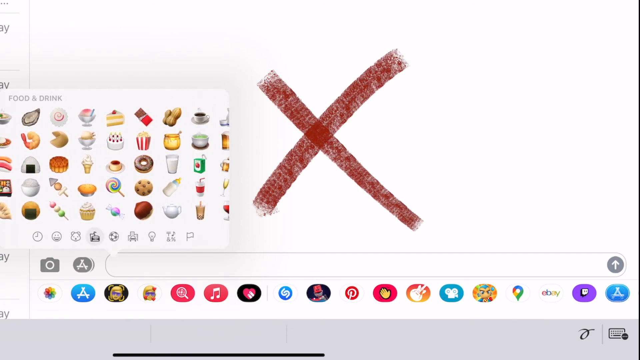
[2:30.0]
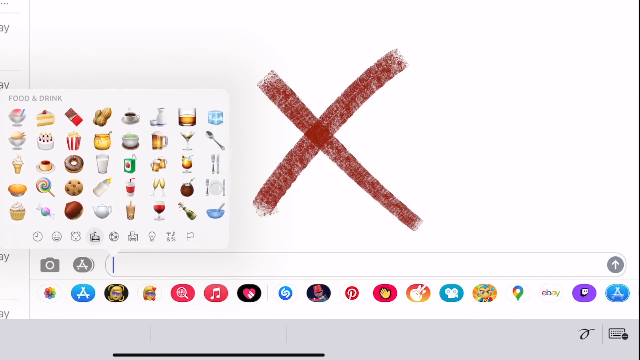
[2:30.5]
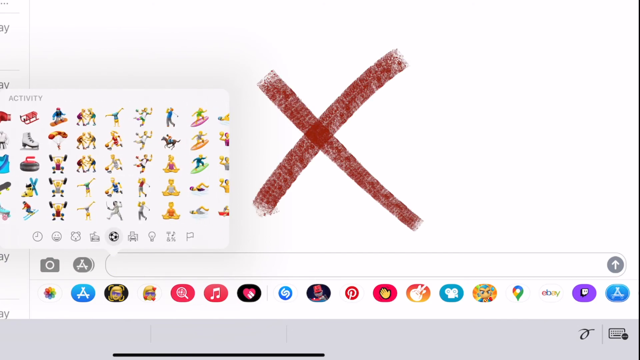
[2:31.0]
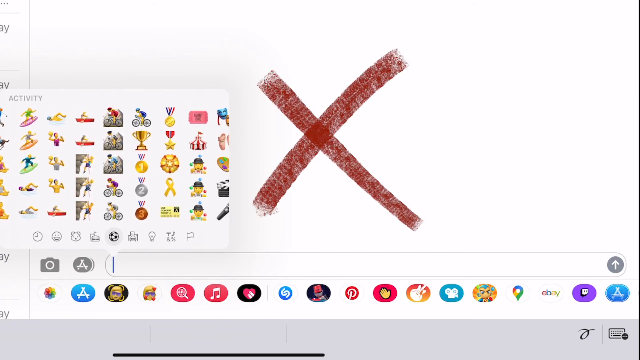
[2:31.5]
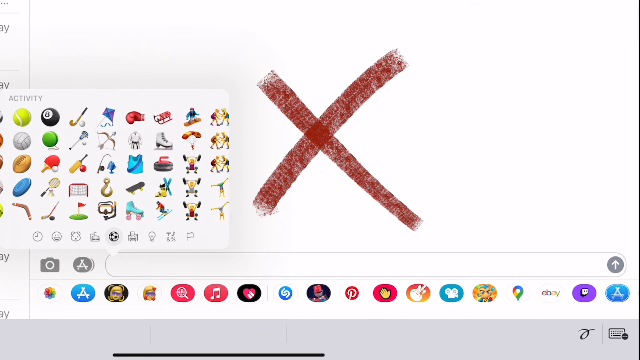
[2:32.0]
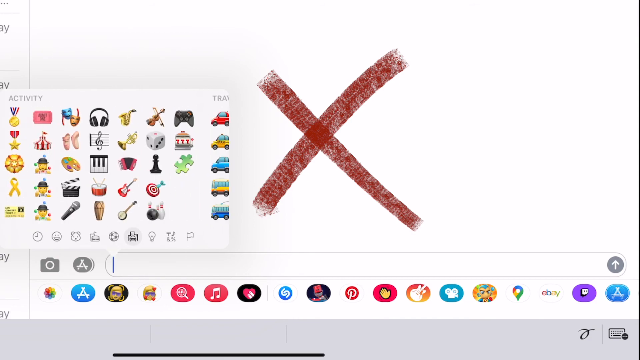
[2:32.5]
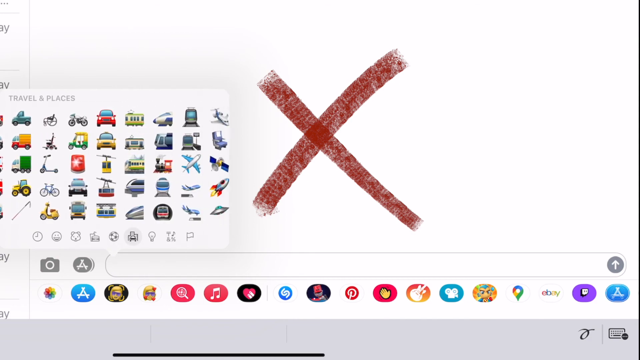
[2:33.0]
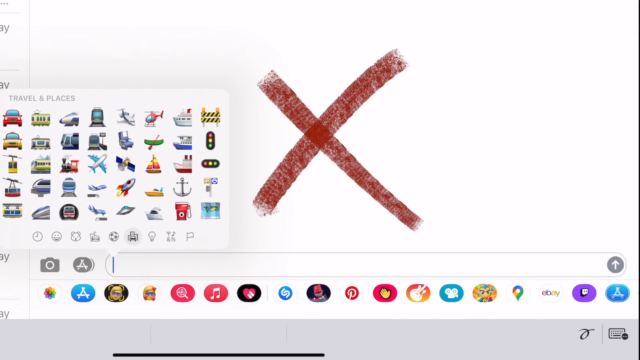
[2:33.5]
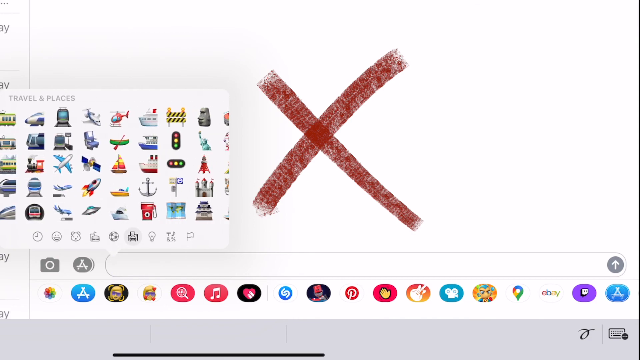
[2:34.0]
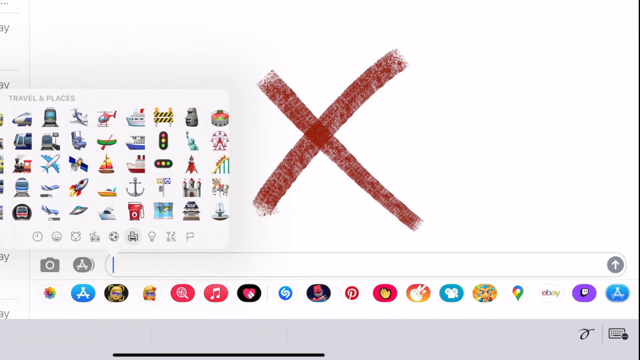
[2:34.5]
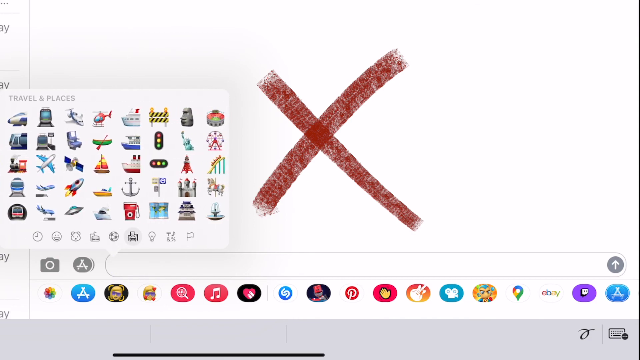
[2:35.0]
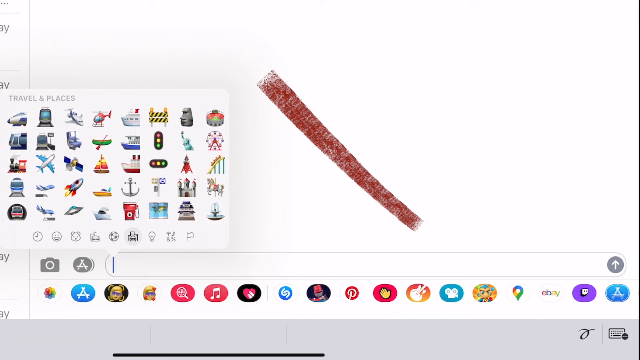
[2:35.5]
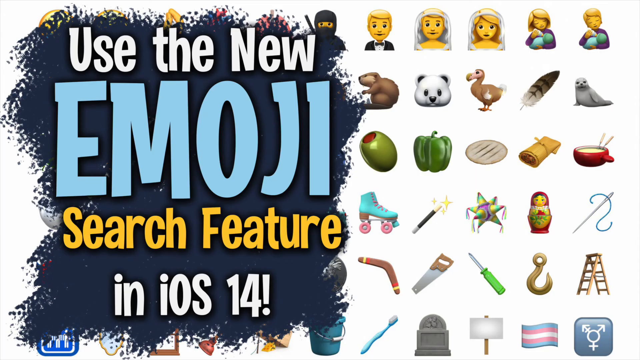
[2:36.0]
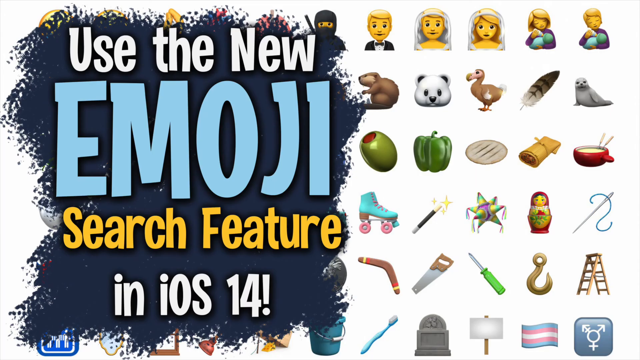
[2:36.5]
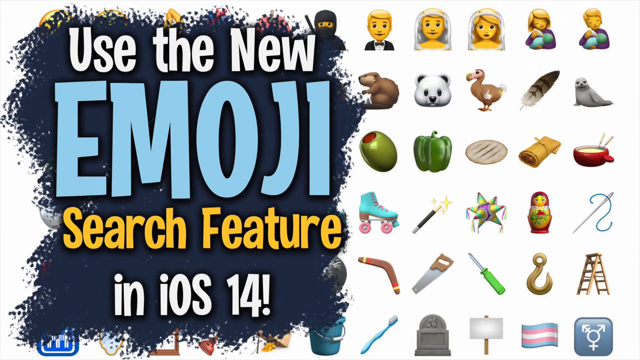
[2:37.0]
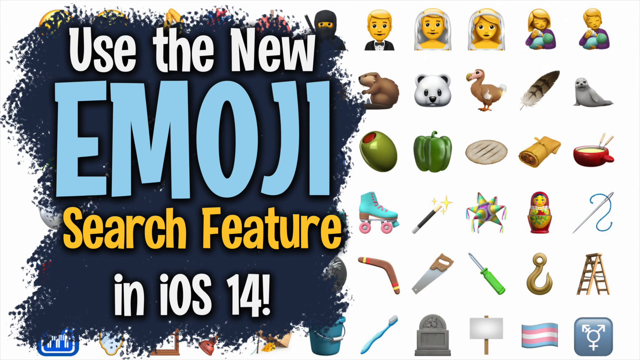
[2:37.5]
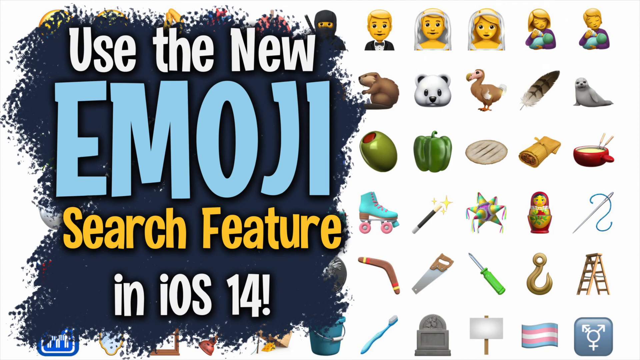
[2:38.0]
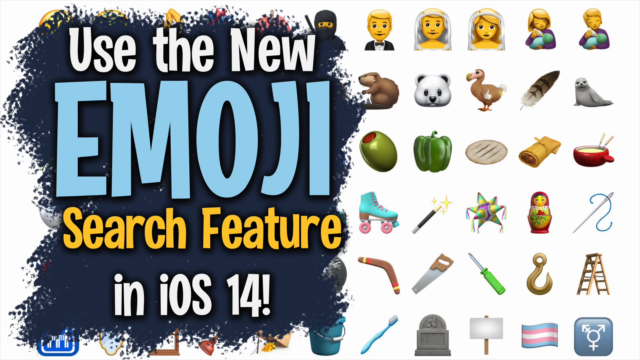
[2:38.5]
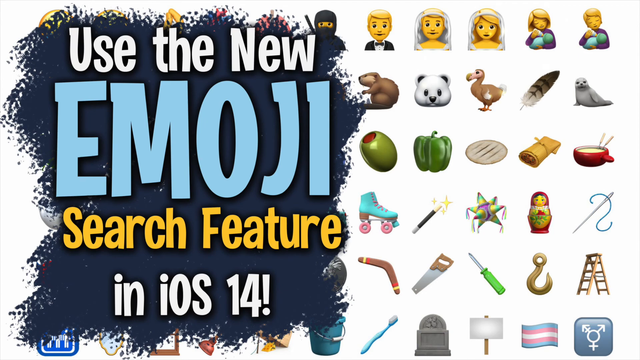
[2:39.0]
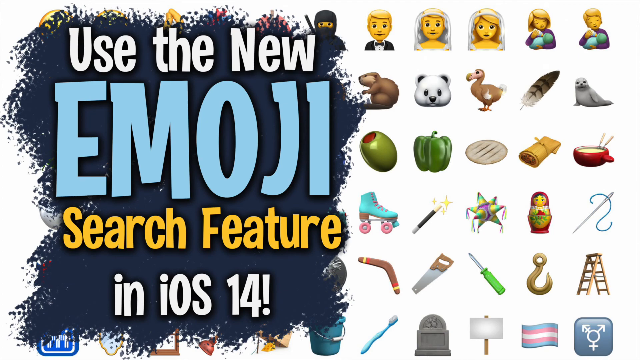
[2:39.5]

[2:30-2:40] The big red X is on the screen. Then many different snack emojis appear, and the emojis are kind of scrolled through across many different categories, without anything being typed into the search bar or any specific emoji being chosen.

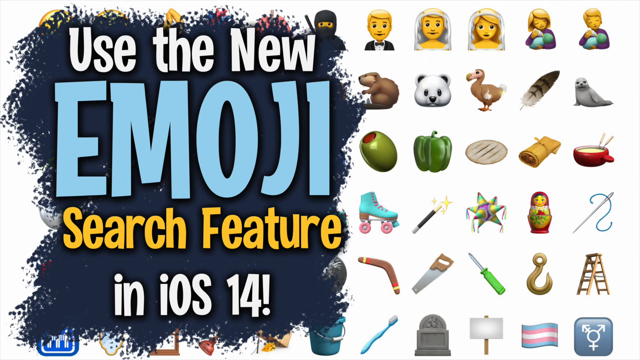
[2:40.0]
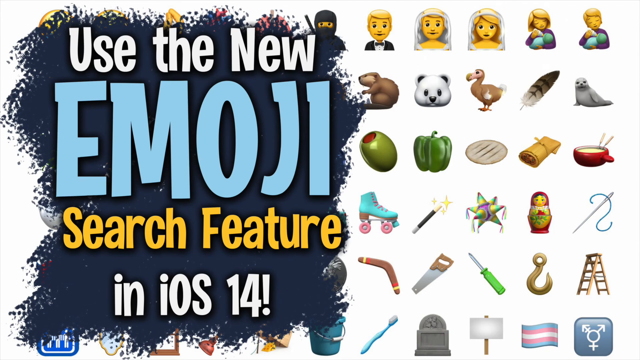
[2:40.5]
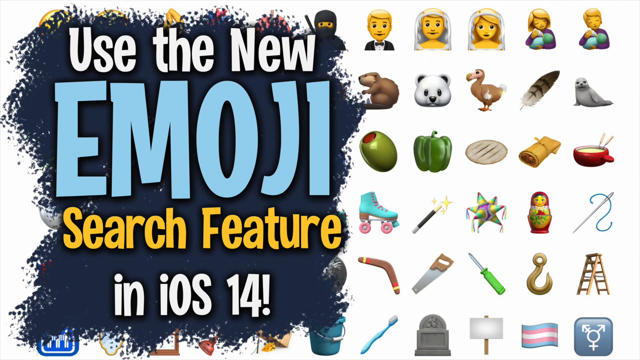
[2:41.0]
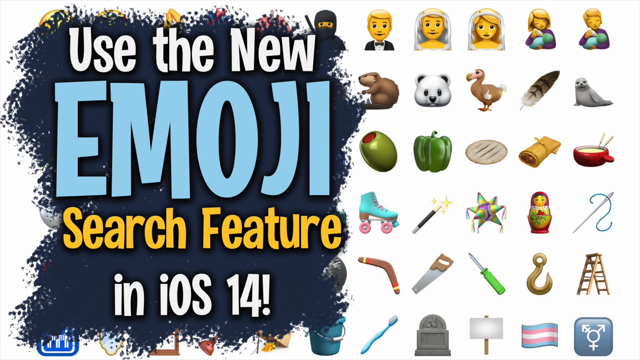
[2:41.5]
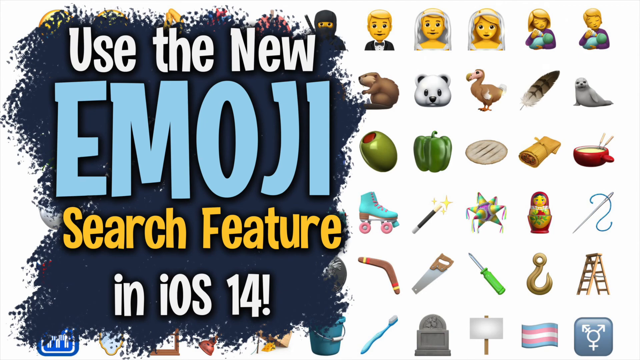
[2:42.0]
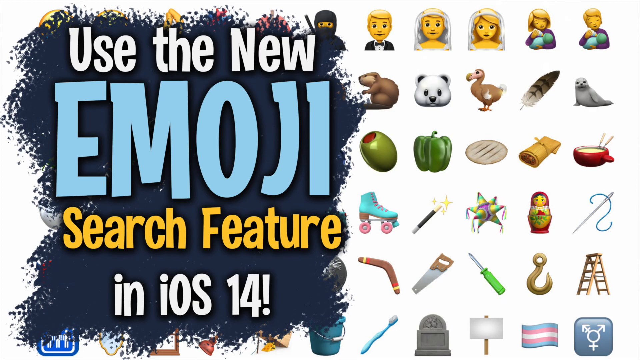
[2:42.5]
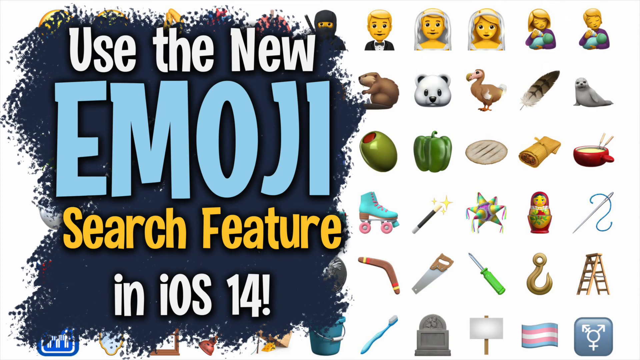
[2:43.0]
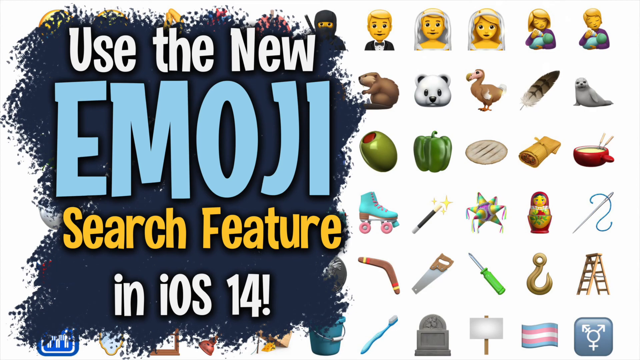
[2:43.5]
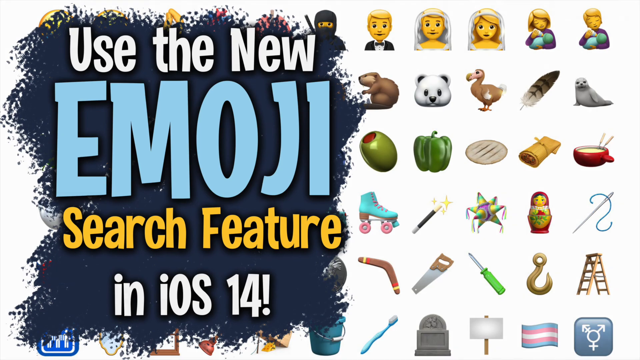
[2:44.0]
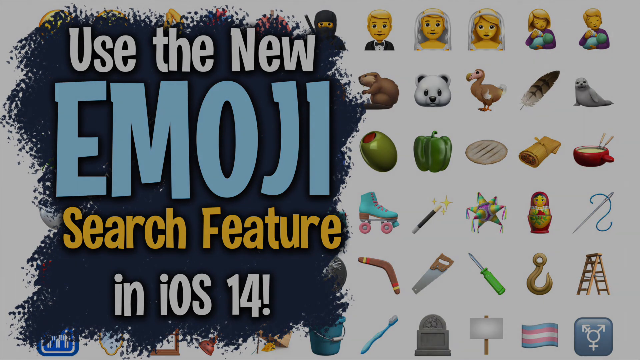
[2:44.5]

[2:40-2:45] The first screen appears again: a white background with a lot of different emojis shown on it and a kind of blue splotch on the left side. Over the blue splotch it says "use the new emoji search feature in iOS 14," with "use the new" and "in iOS 14" in white print, "emoji" in large light blue print and "search feature" in yellow print. It is the exact same screen the video started with.